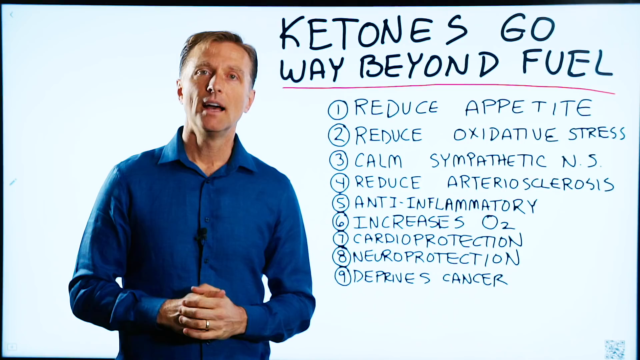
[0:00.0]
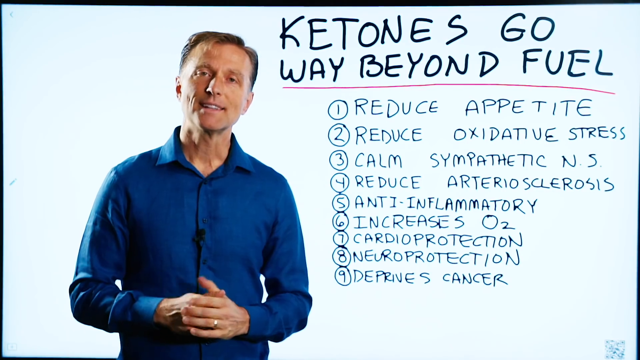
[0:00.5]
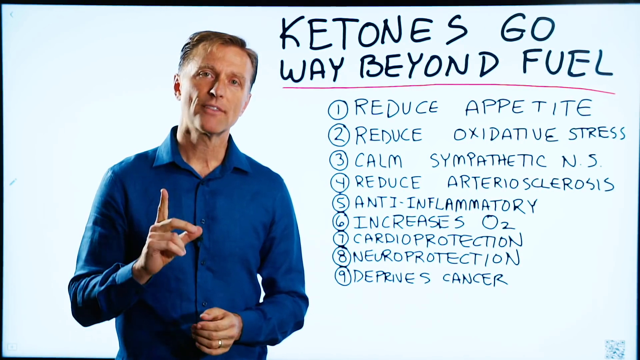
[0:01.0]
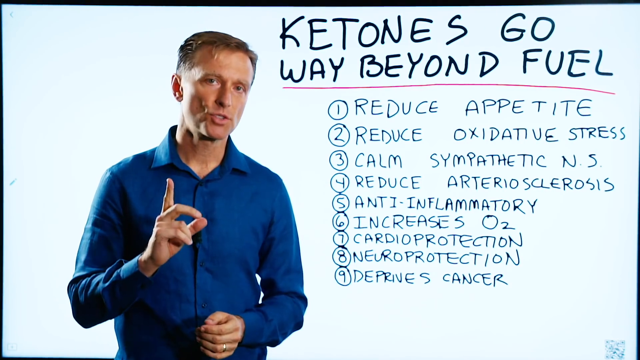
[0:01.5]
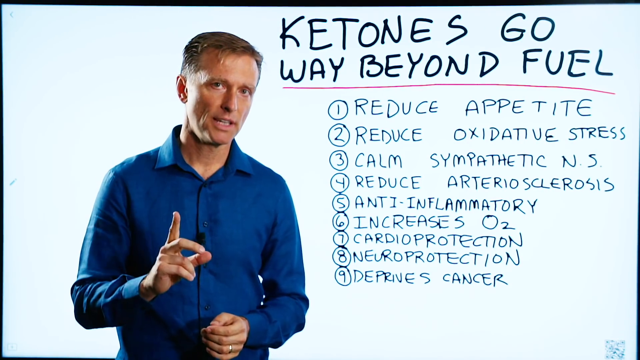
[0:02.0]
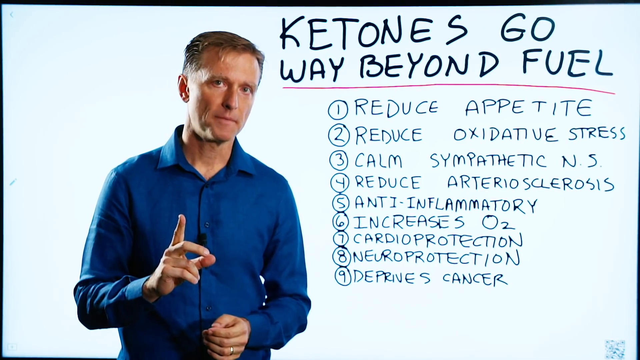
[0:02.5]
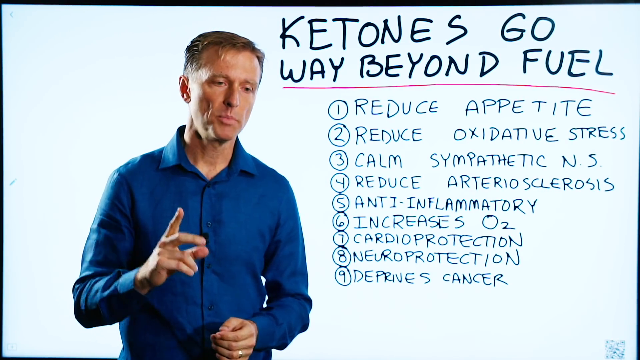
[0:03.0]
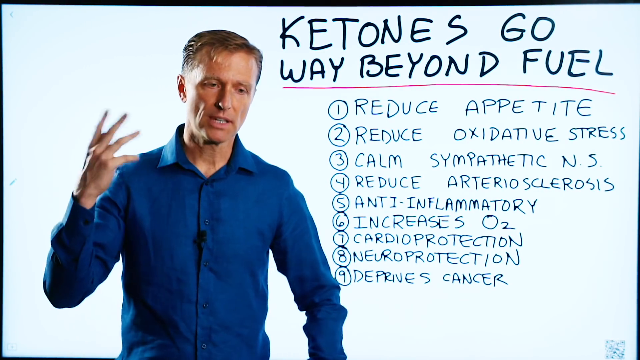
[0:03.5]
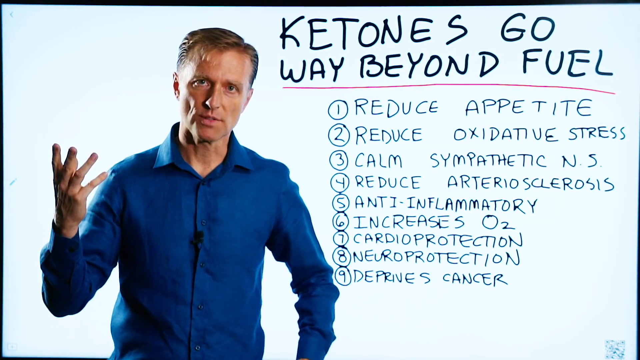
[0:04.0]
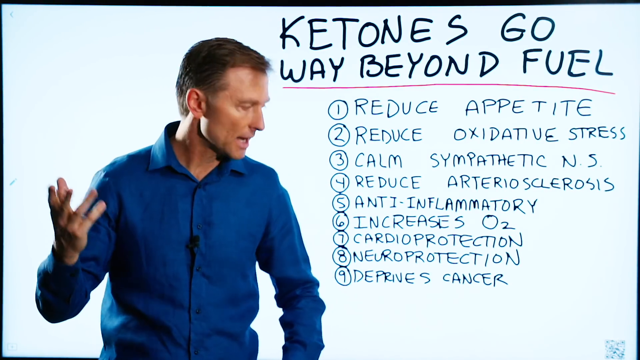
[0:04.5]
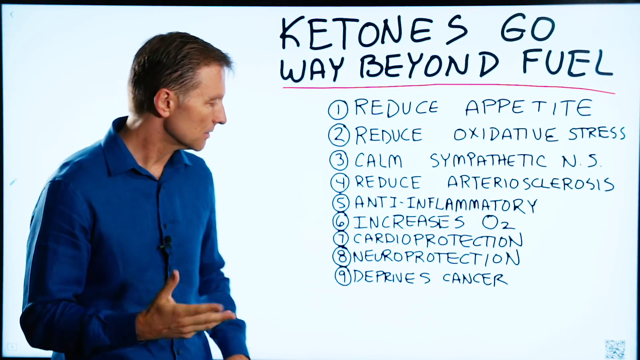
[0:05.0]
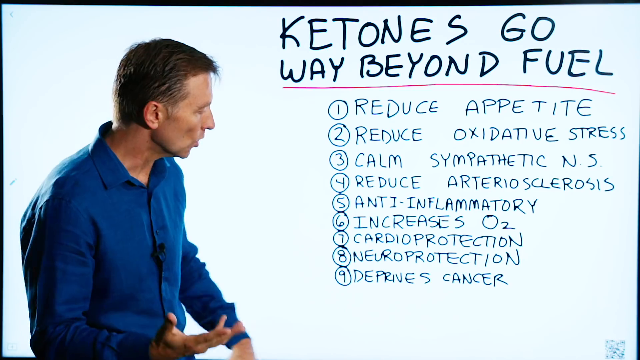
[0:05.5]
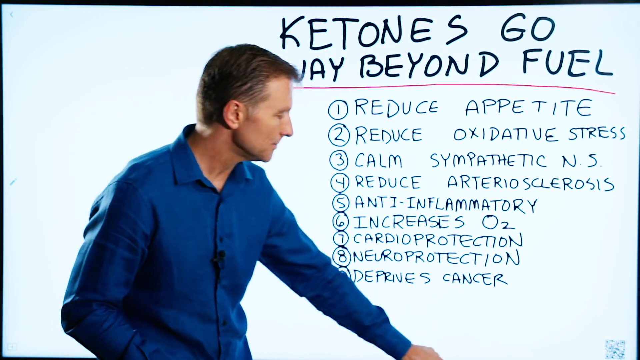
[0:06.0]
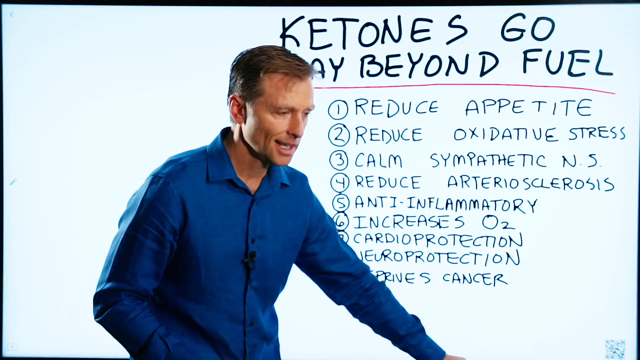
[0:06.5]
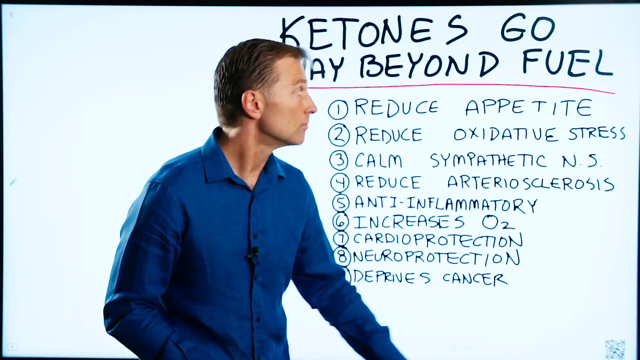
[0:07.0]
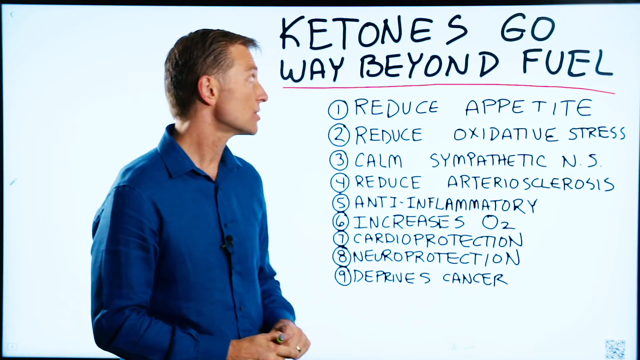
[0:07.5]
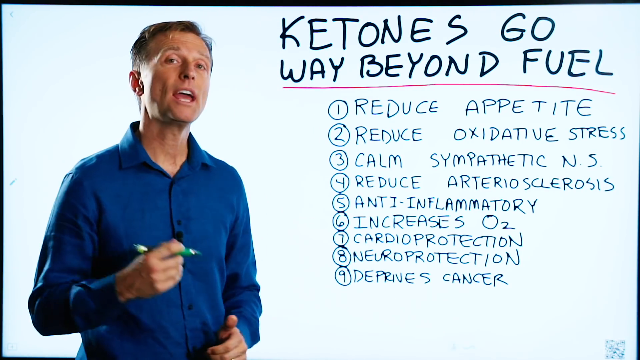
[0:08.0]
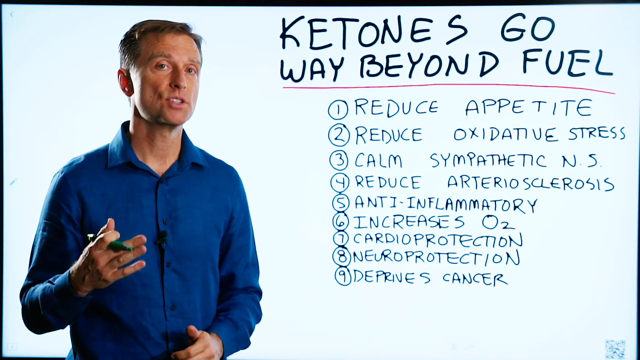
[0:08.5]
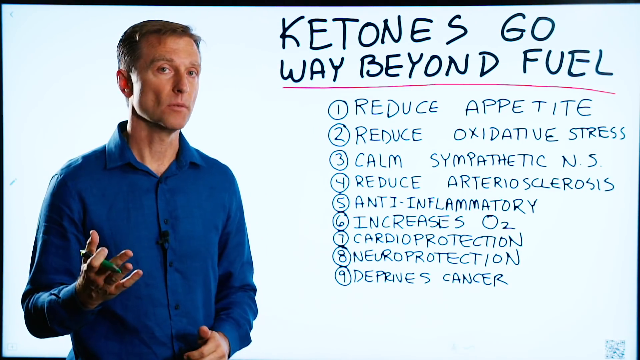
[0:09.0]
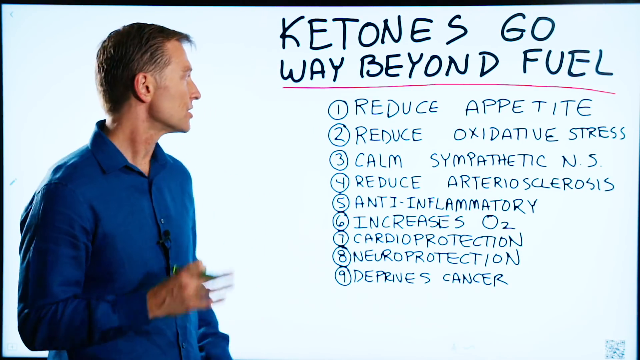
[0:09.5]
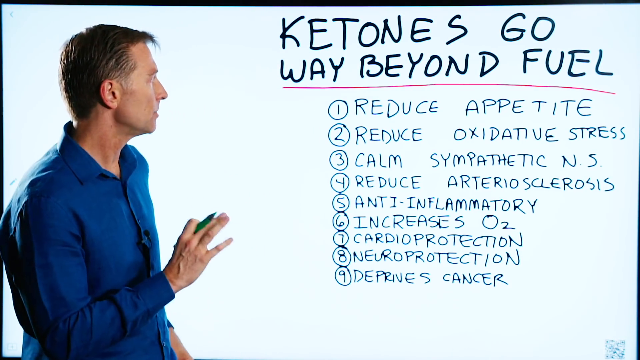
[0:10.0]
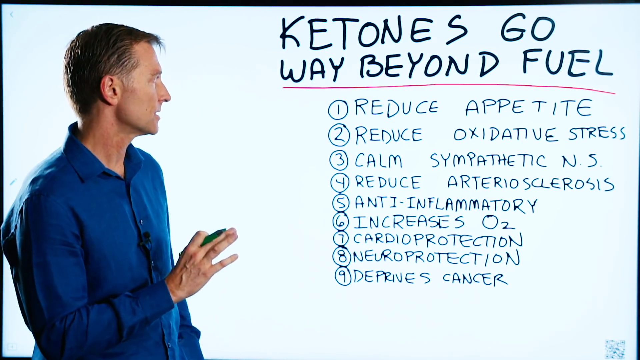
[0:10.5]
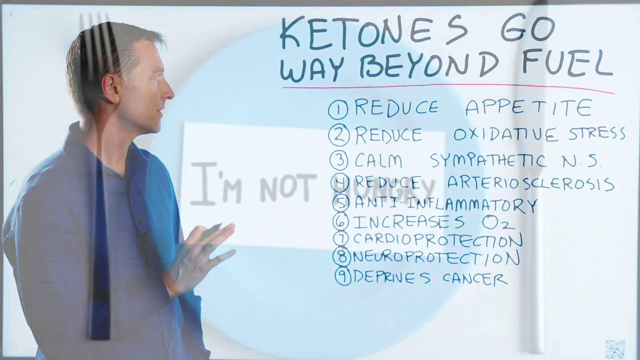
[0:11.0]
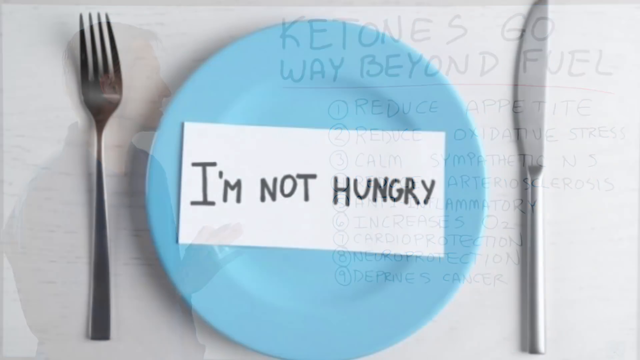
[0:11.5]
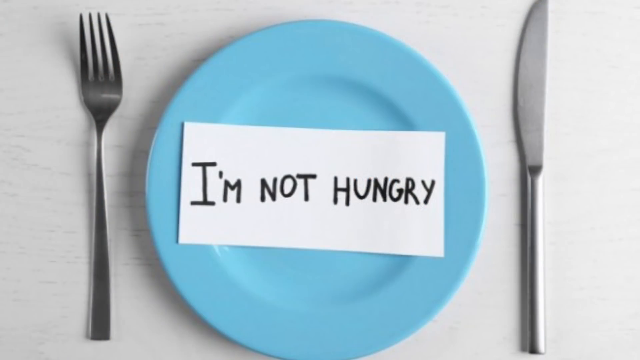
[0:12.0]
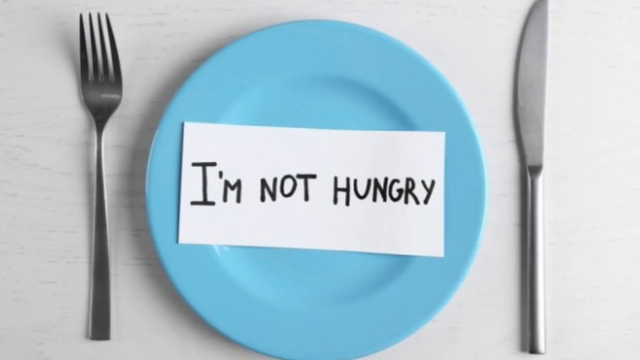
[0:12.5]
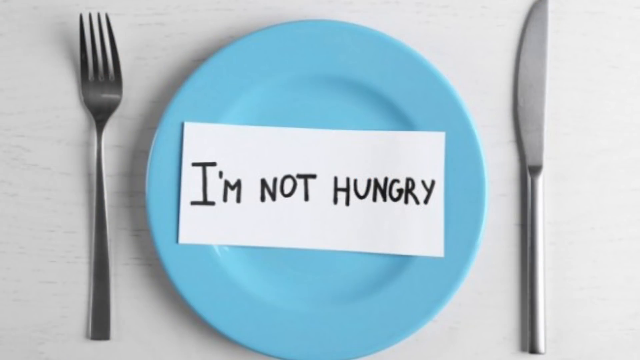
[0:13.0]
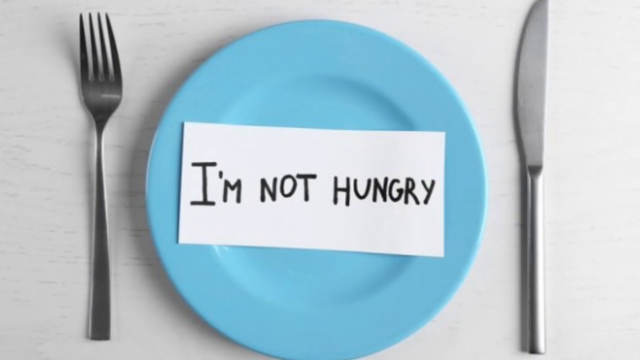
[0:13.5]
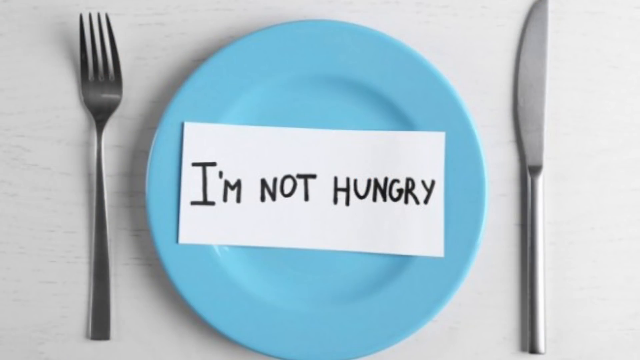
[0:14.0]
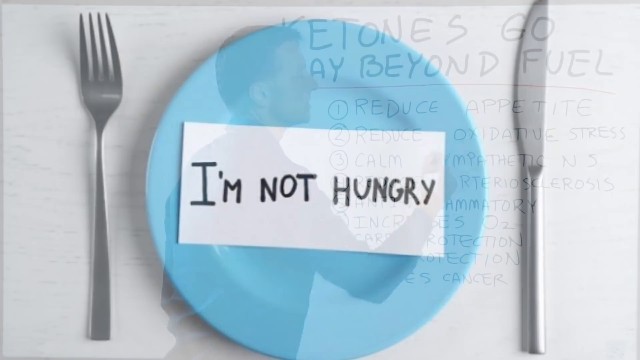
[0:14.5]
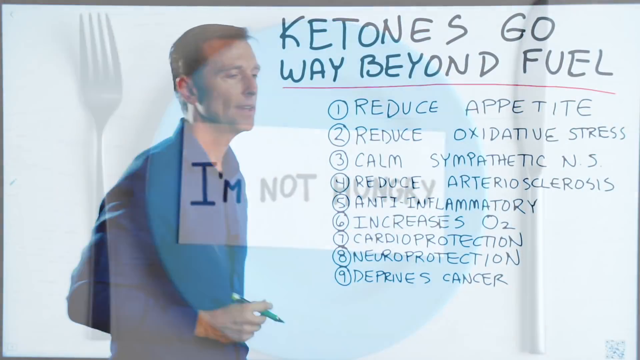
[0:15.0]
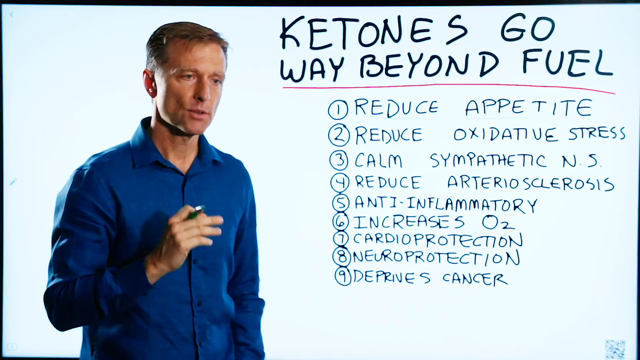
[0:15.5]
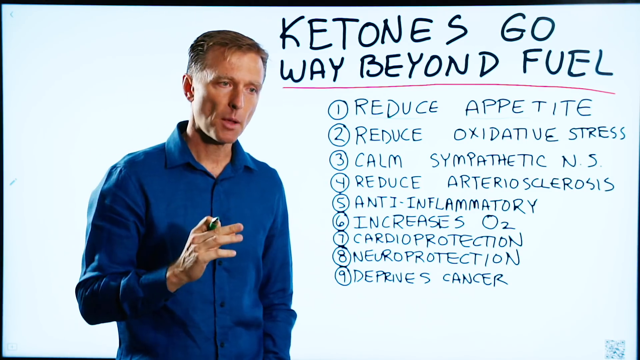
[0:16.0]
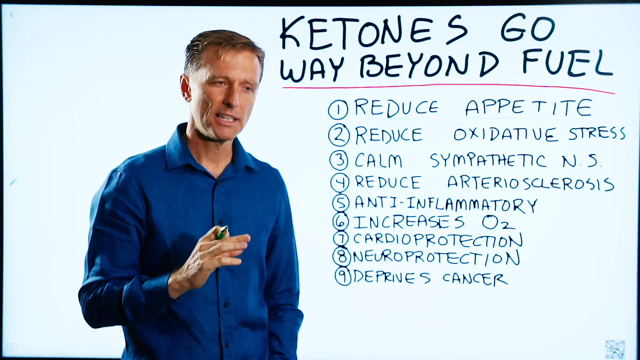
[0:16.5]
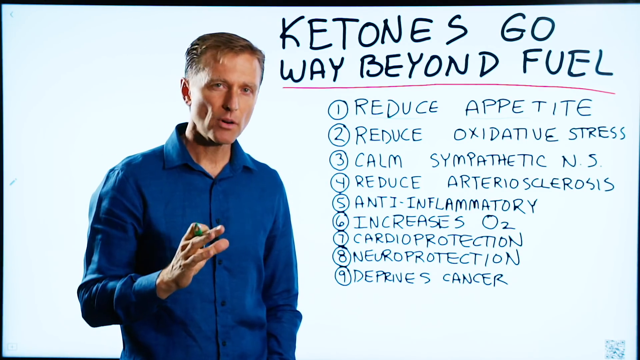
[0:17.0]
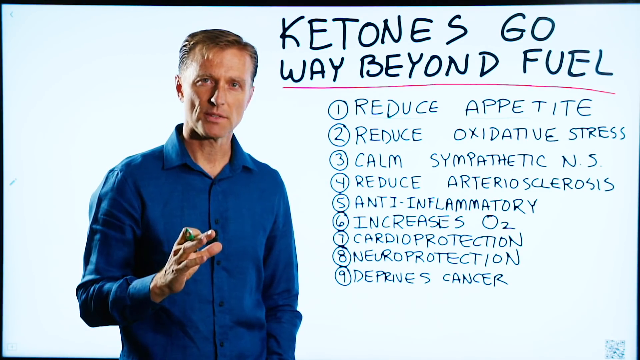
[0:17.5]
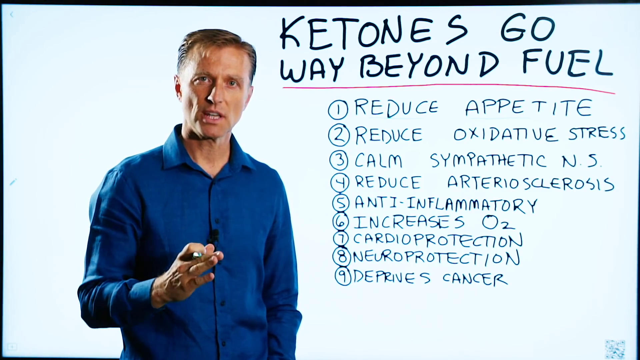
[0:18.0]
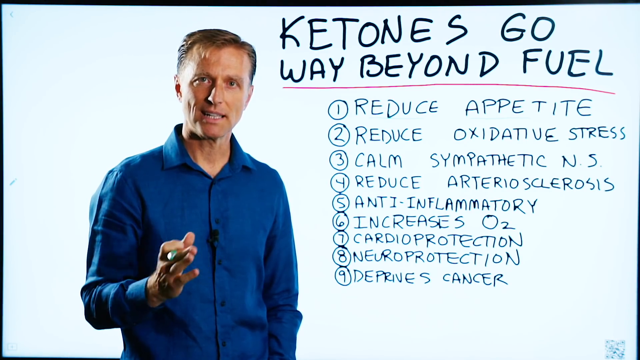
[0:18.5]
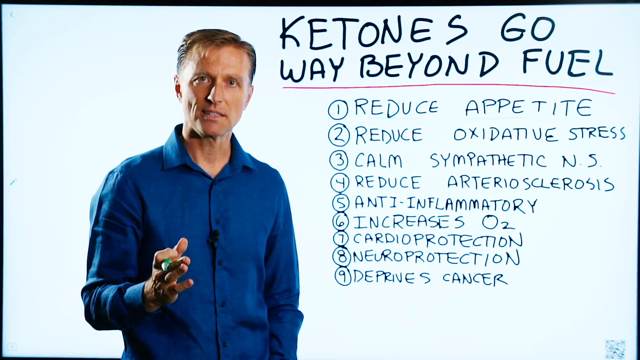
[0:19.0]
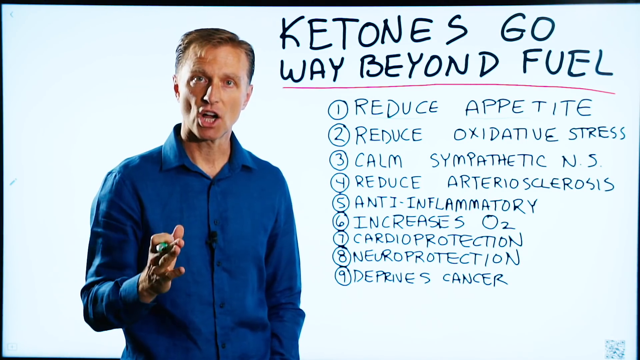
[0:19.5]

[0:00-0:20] A white man who looks probably between 35 and 45, wearing a blue shirt and holding some sort of marker, is in front of a digital background. Next to him on the screen is the heading "Ketones go way beyond" with a list of nine points: one, "reduce appetite"; two, "reduce oxidative stress"; three, "calm sympathetic nervous system"; four, "reduce arteriosclerosis"; five, "anti-inflammatory"; six, "increases O2"; seven, "cardioprotection"; eight, "neuroprotection"; and nine, "deprives cancer". He seems to be talking very quickly and seems to be an expert in the field. The video then shows a blue plate with a fork to the left and a knife to the right, which look to be probably metal or silver, along with an index-looking card that says "I'm not hungry" in black capital letters. It then zooms back to the man, who is speaking.